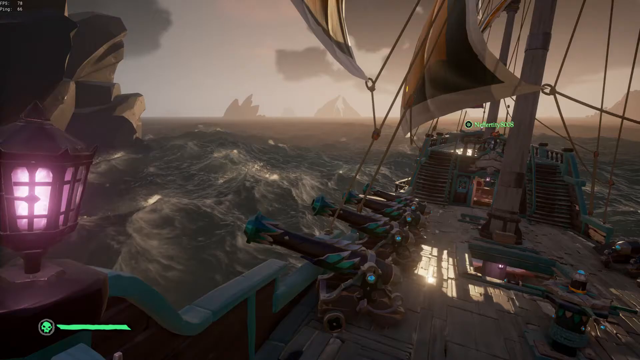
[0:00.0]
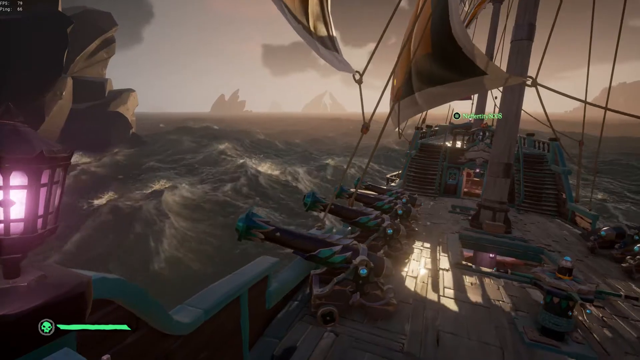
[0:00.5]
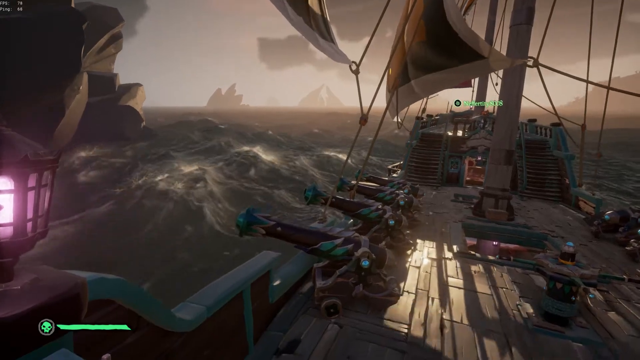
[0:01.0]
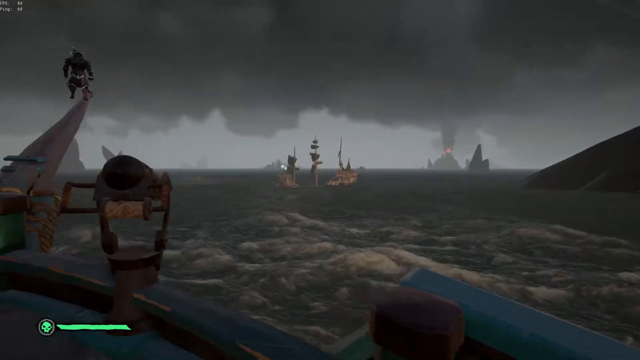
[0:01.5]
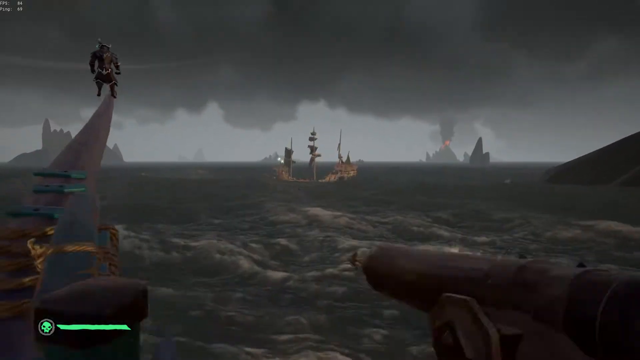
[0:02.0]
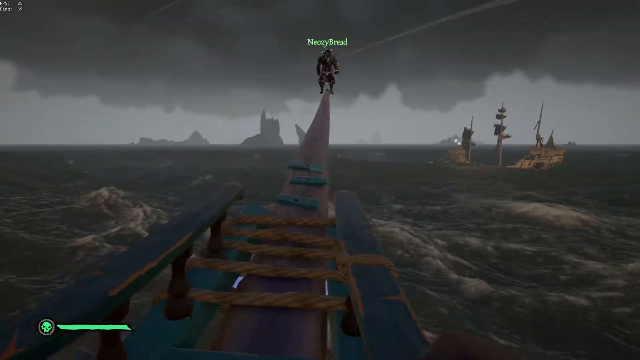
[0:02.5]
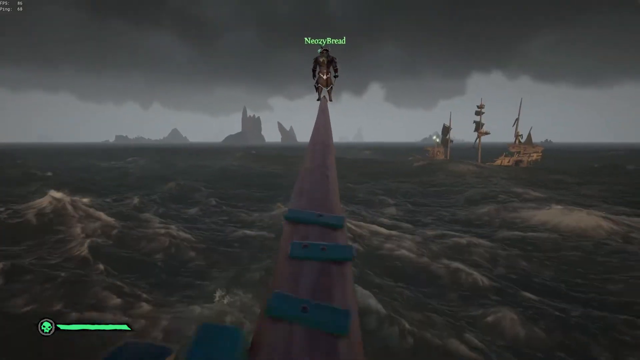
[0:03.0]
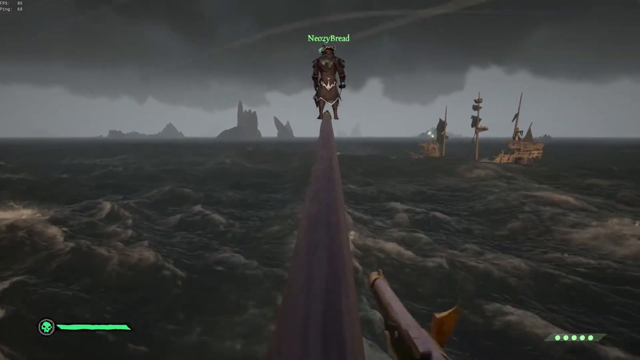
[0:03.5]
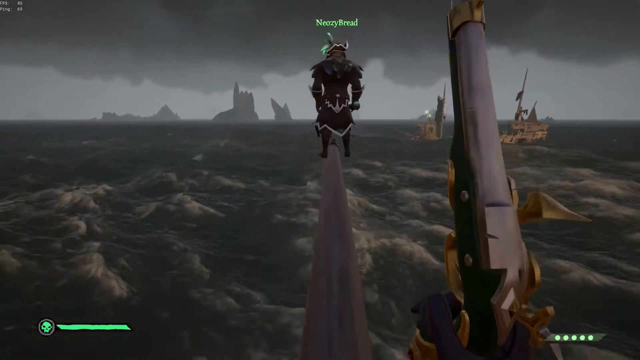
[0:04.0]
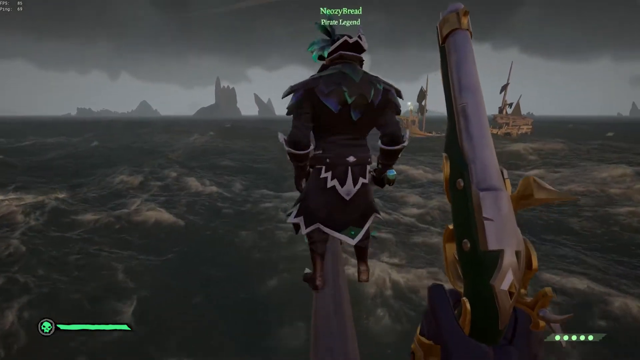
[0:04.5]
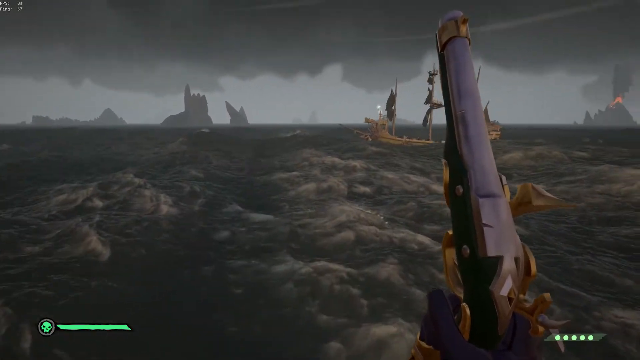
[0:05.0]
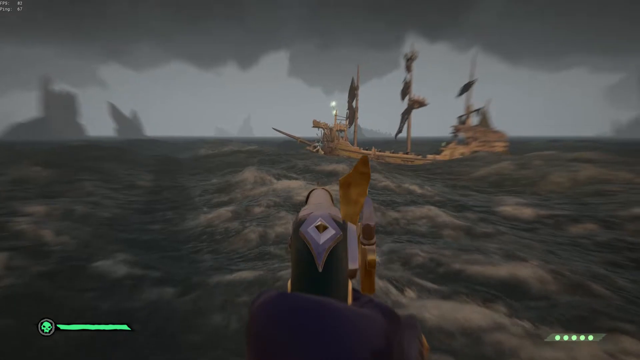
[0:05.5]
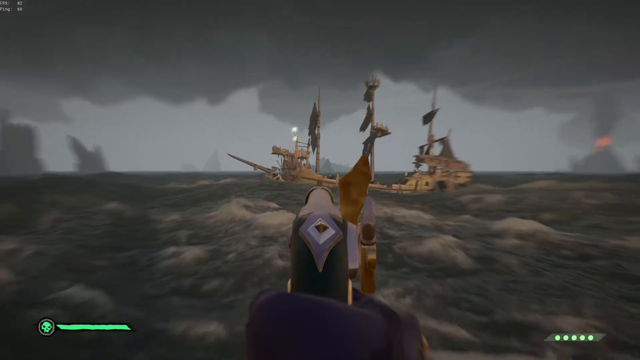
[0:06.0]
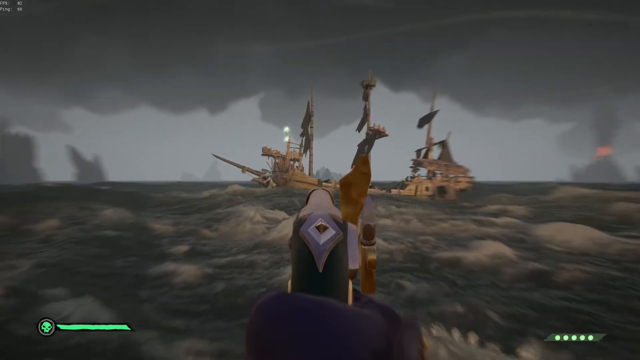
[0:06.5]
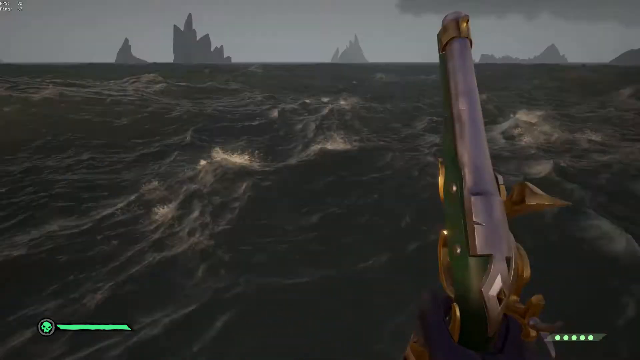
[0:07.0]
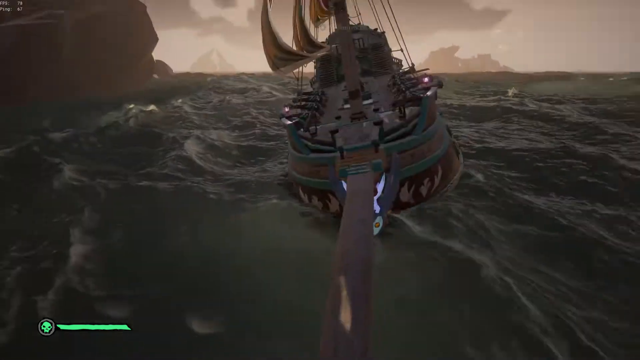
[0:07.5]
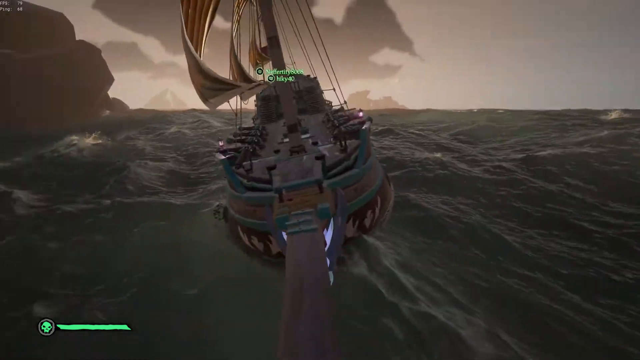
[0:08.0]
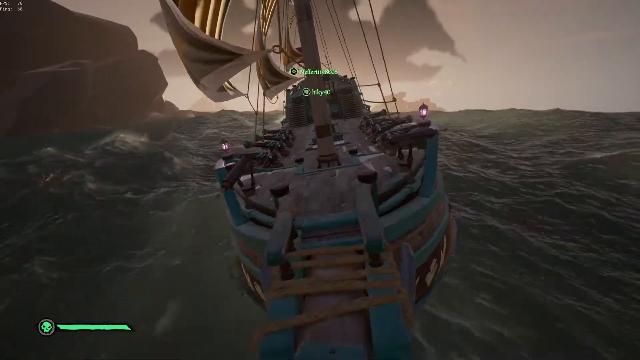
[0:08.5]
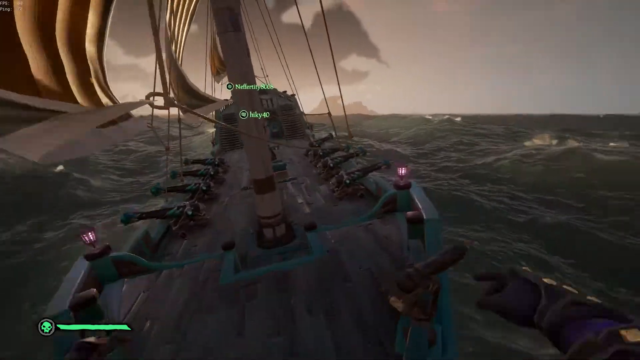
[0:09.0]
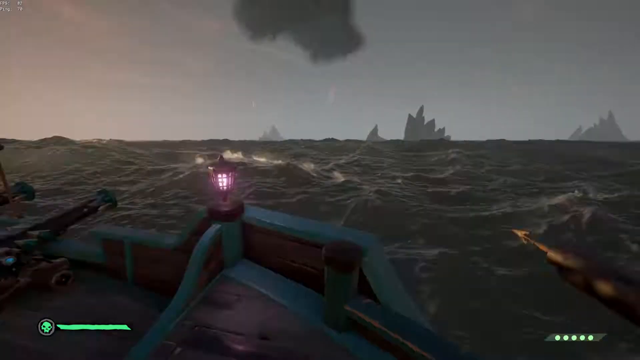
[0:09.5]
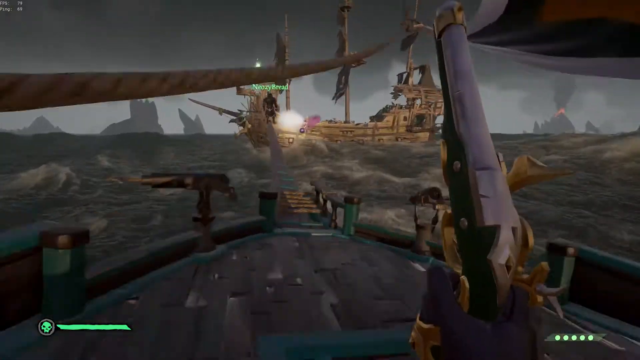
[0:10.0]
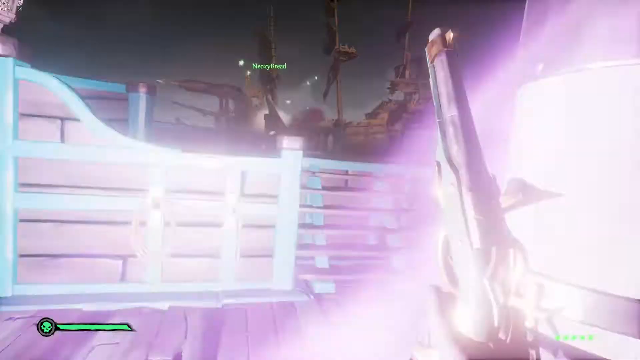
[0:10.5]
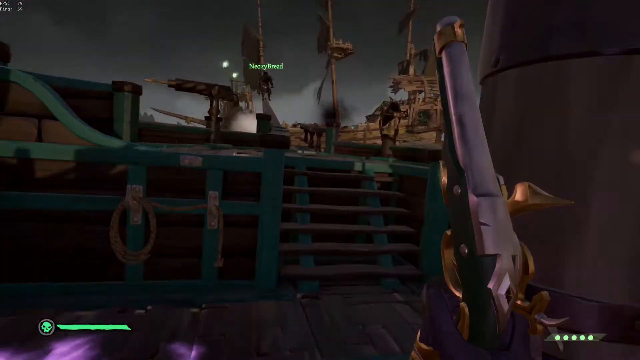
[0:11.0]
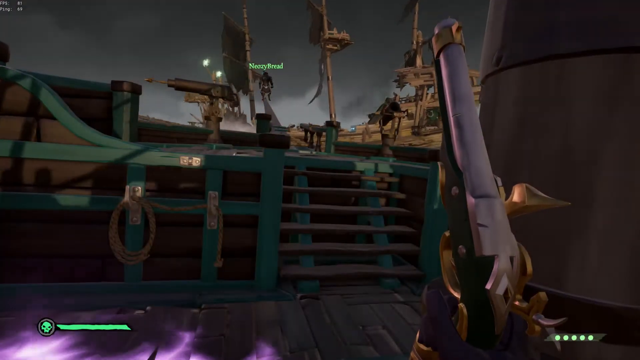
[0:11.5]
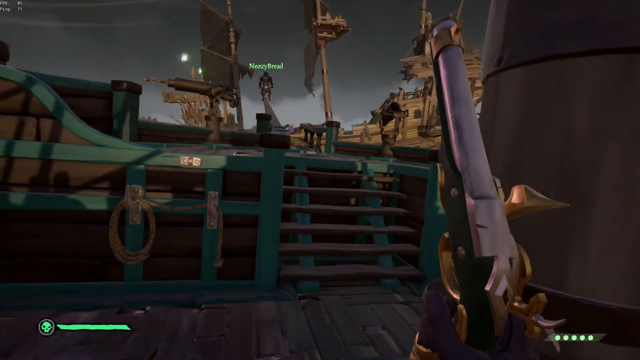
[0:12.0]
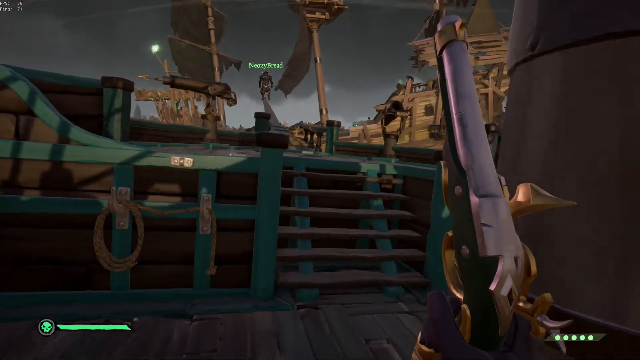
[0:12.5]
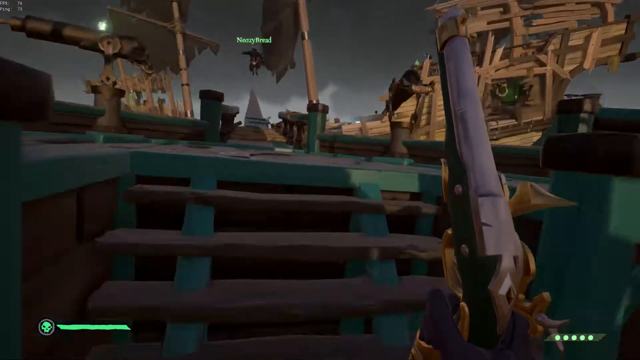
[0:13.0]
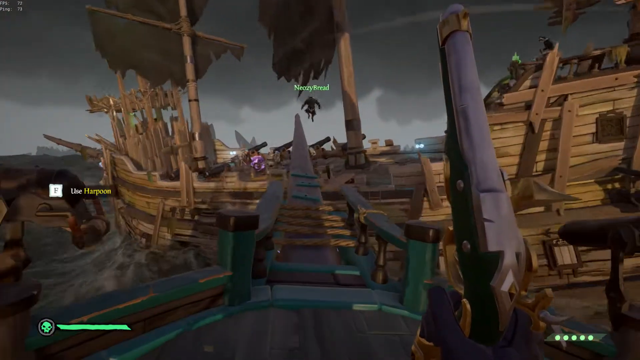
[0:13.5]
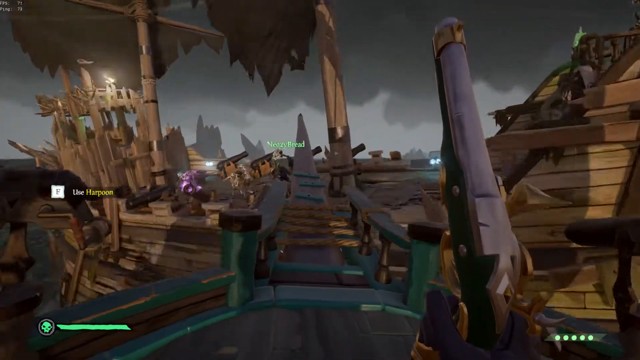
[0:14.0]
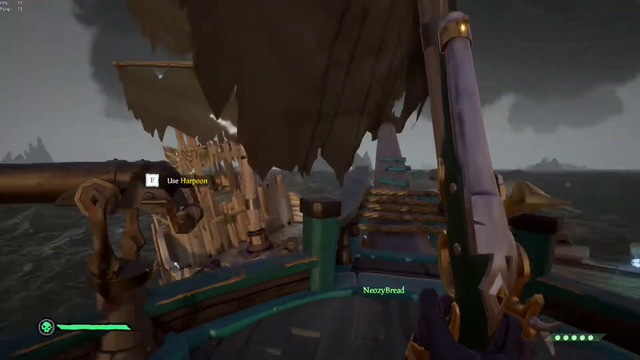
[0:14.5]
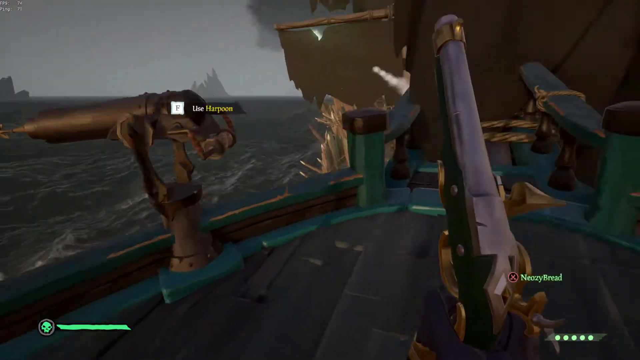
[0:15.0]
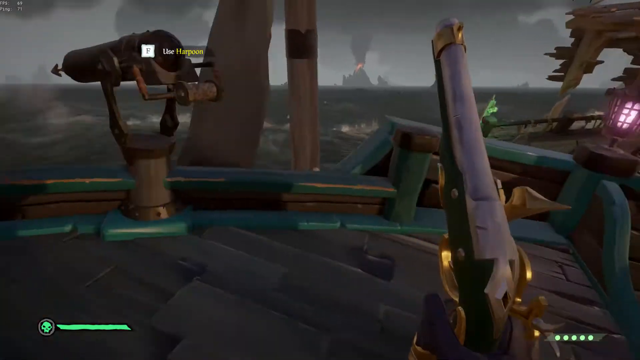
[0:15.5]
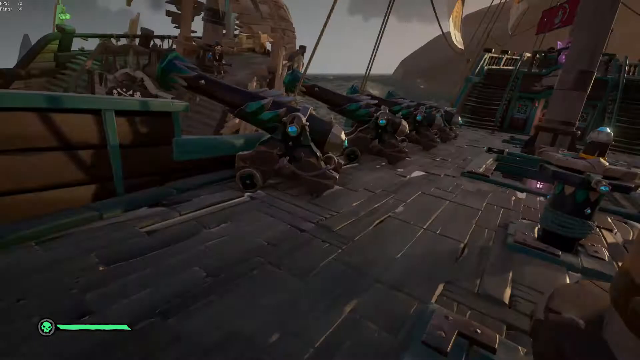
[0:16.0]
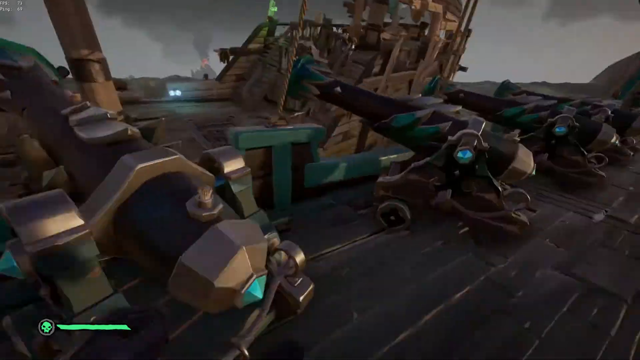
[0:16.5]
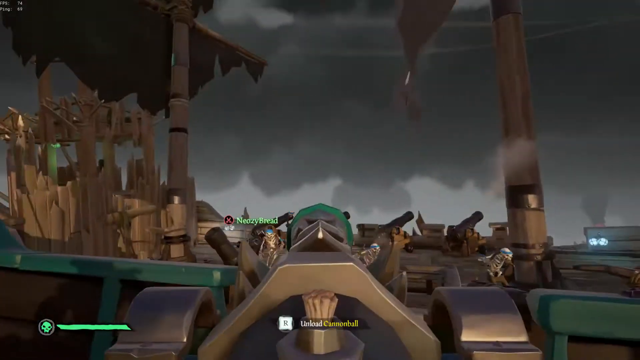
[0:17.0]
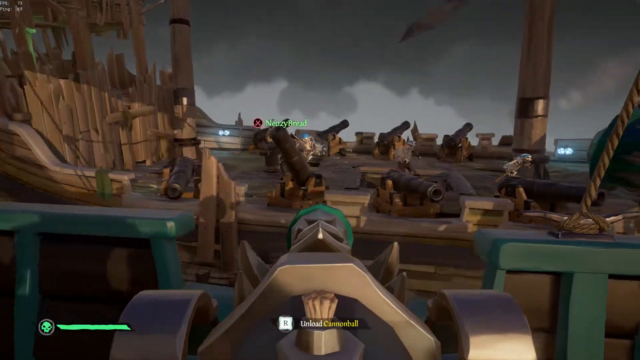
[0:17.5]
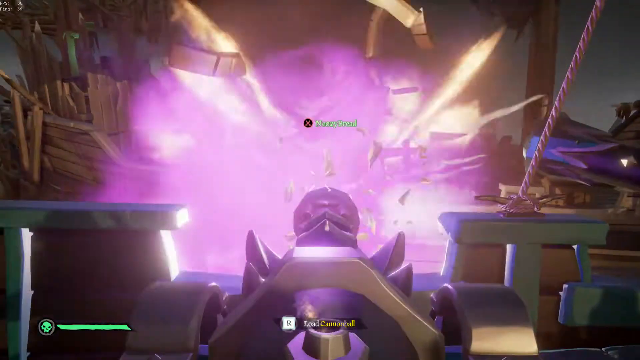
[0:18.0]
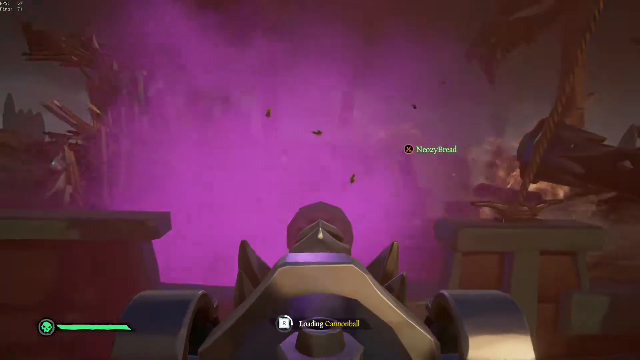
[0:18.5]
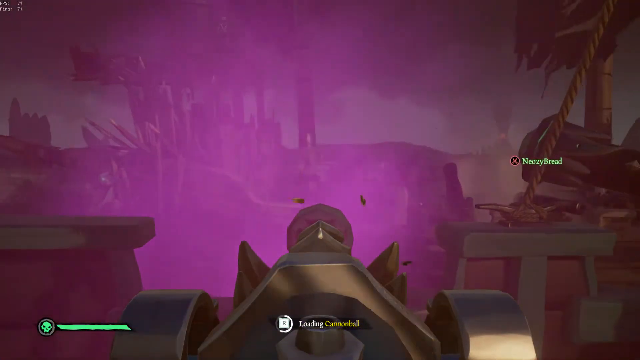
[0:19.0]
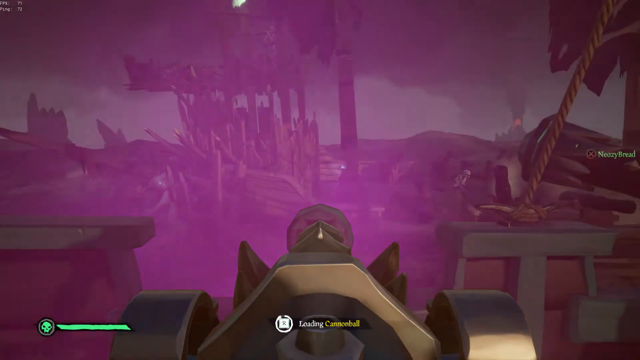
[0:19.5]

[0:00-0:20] What looks like a video game, seen as a first-person shooter, shows a battle emerging between two old-time wooden ships on the ocean. The attacking ship, the one the view is on, first approaches the other ship. It fires a cannon into the other ship and attempts to board it. The color palette is very muted with some sparks of color: teal accents on the cannons and a glowing purple light. Some kind of storm appears to be brewing in the distance. It is very cloudy, with dark clouds overhead, choppy waters and lots of waves. Each player has a name above them in green lettering. Partway through, the ship the view is on rams the other ship, attempting to board.